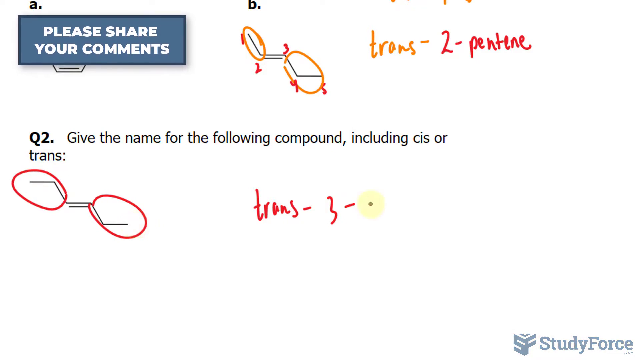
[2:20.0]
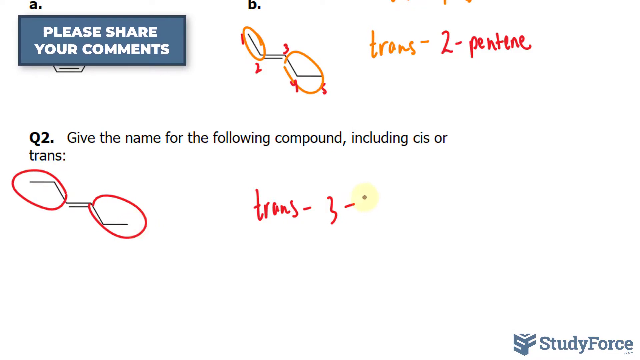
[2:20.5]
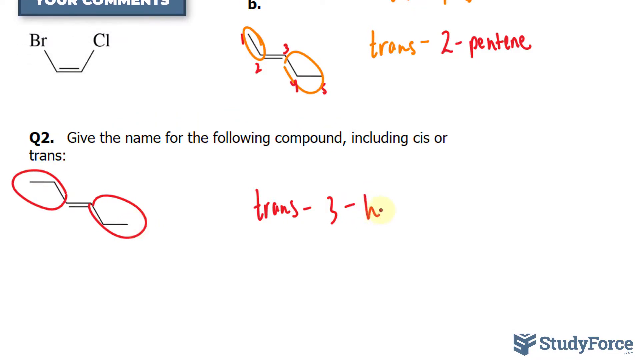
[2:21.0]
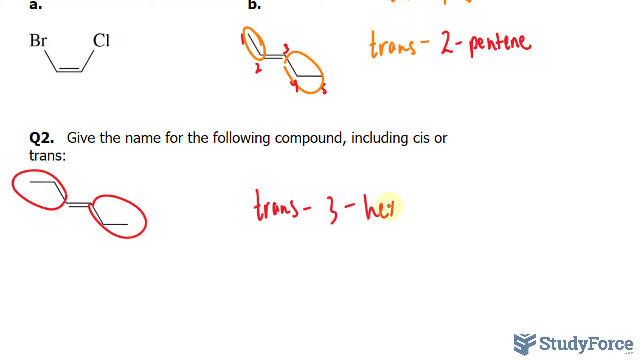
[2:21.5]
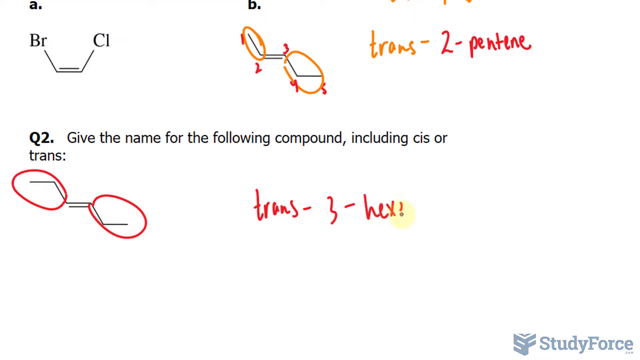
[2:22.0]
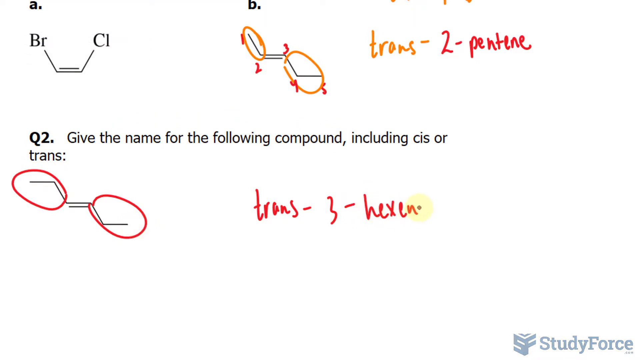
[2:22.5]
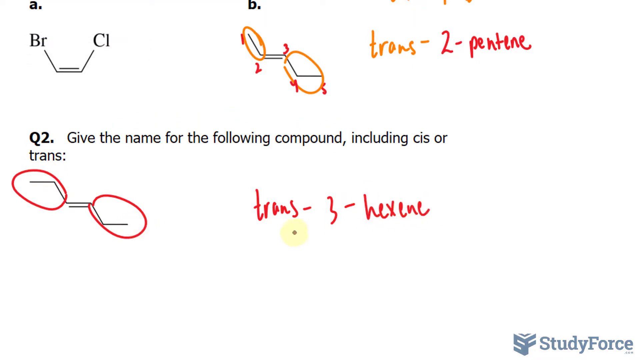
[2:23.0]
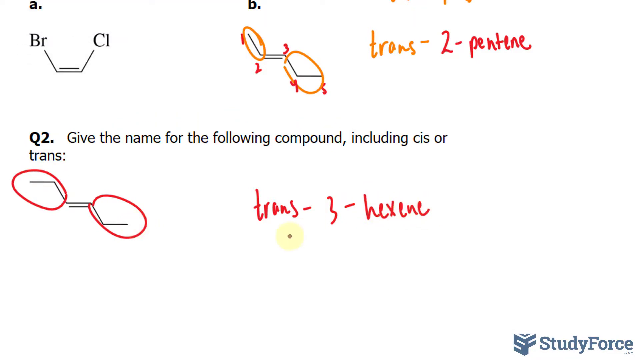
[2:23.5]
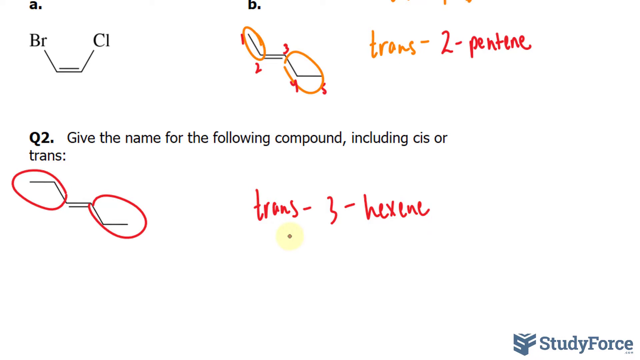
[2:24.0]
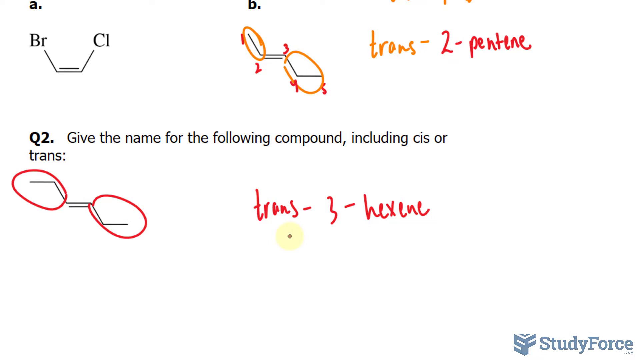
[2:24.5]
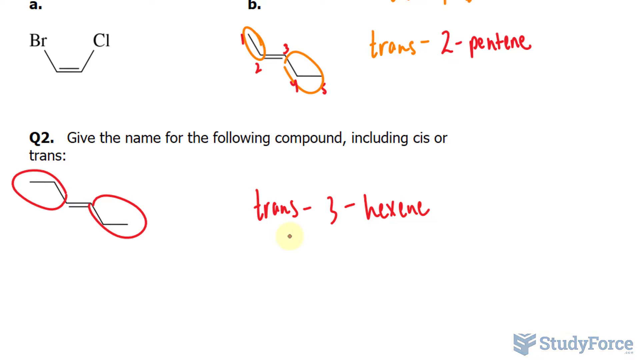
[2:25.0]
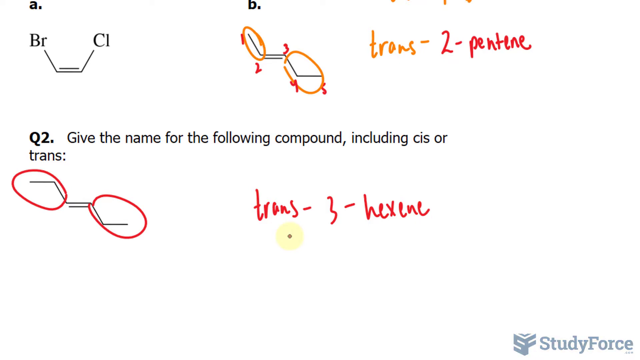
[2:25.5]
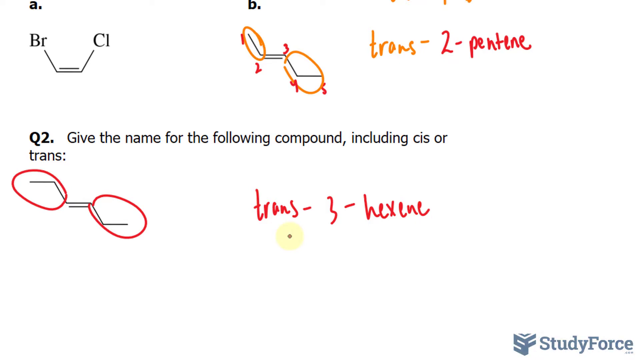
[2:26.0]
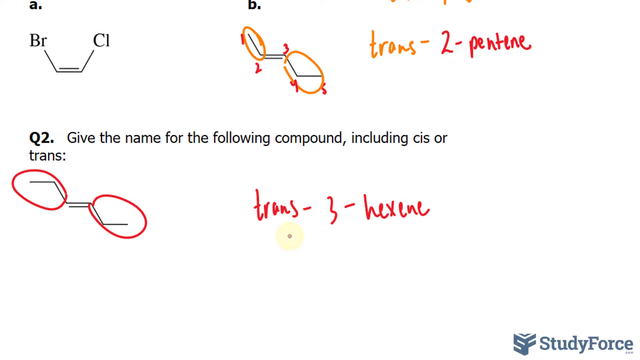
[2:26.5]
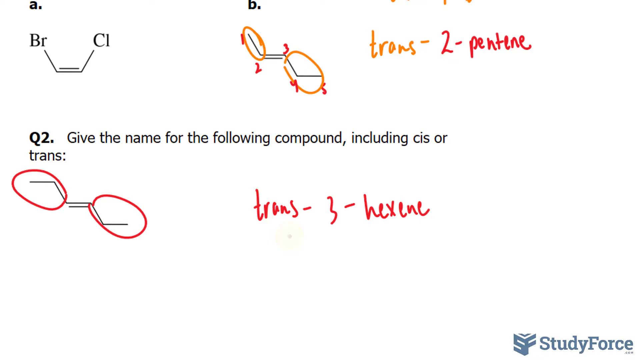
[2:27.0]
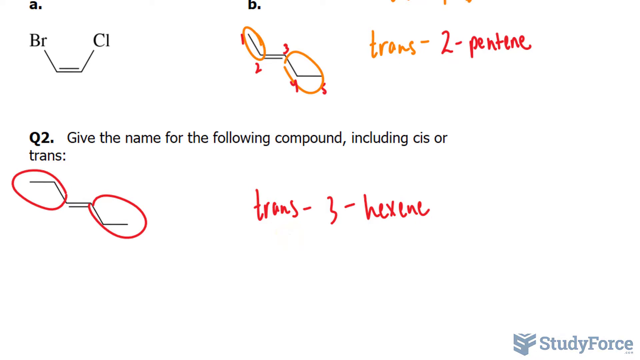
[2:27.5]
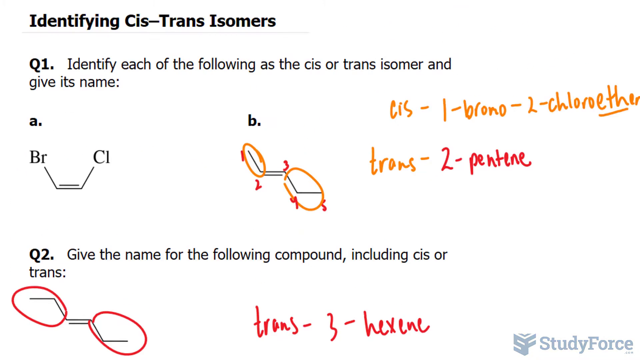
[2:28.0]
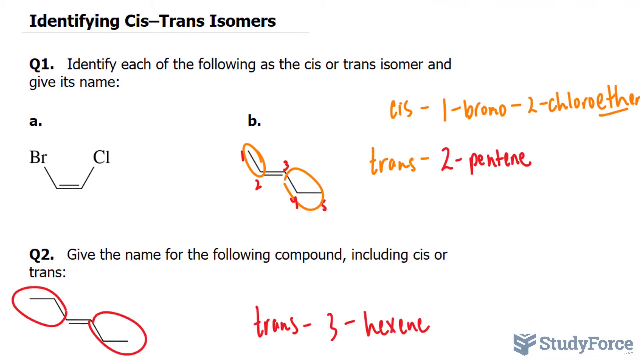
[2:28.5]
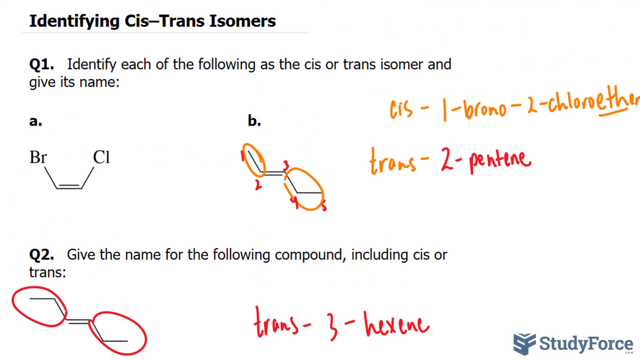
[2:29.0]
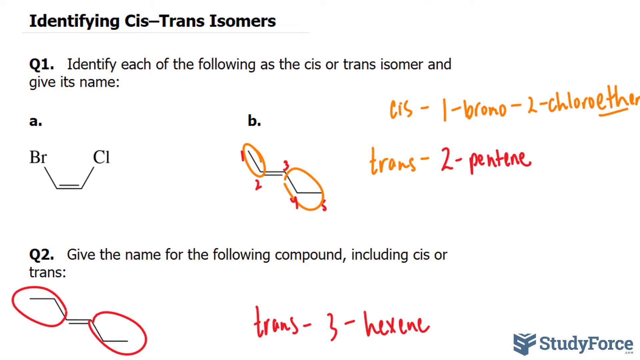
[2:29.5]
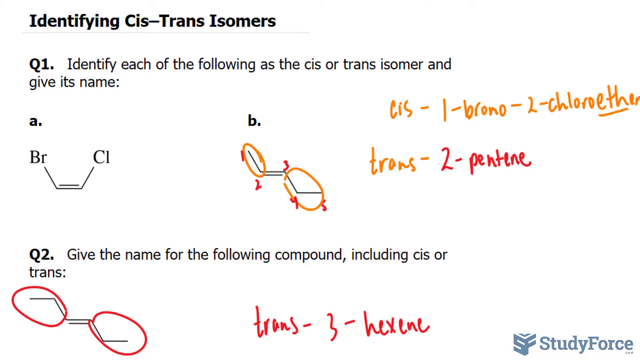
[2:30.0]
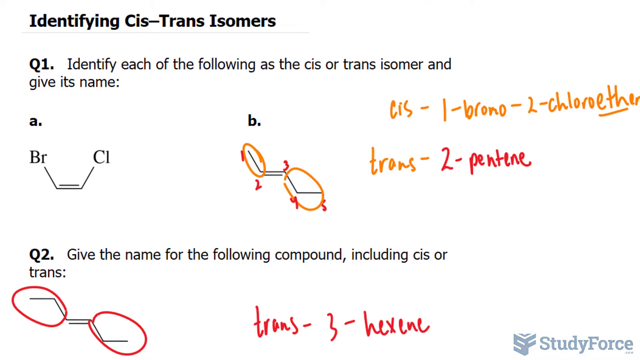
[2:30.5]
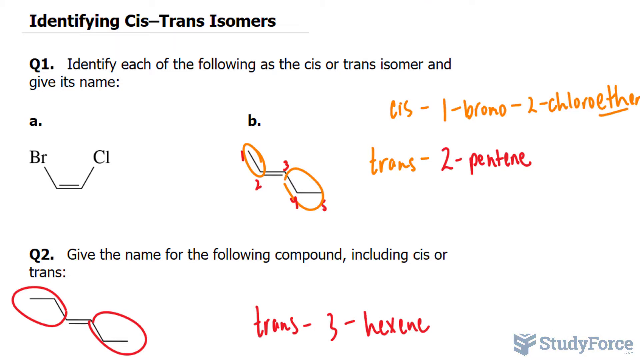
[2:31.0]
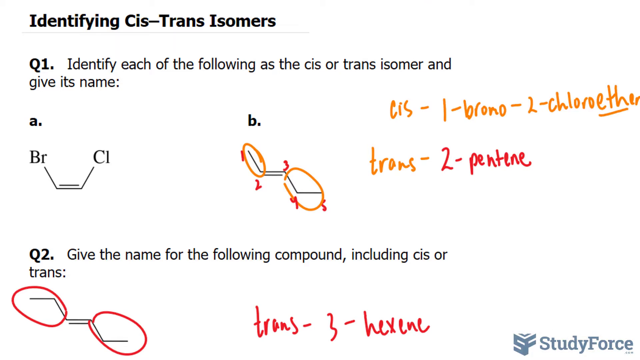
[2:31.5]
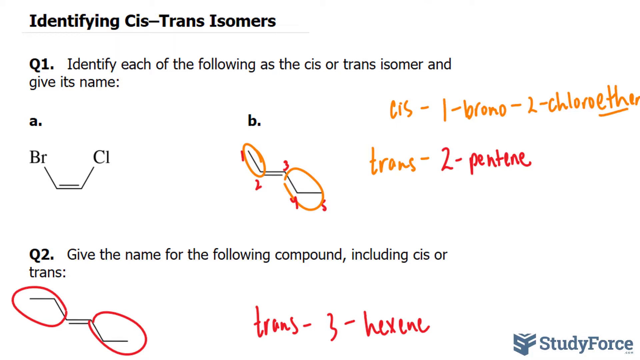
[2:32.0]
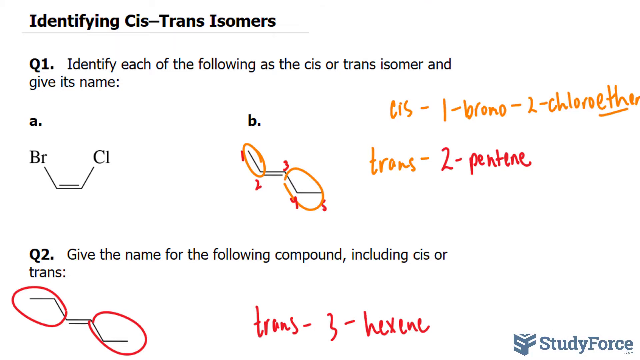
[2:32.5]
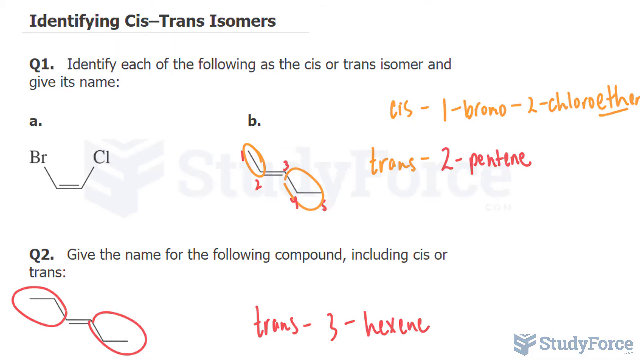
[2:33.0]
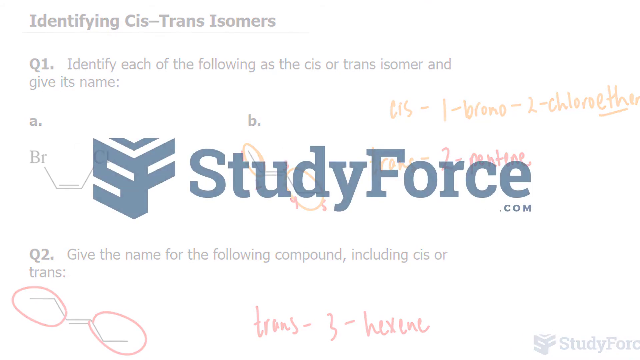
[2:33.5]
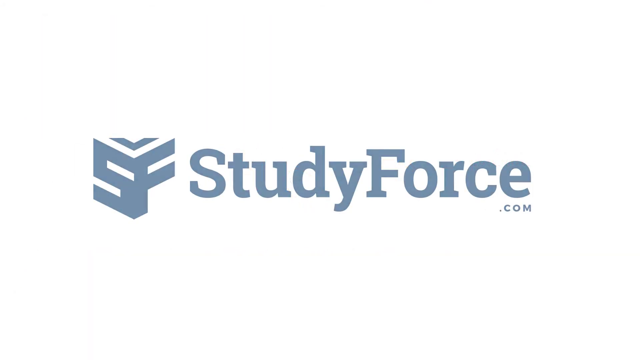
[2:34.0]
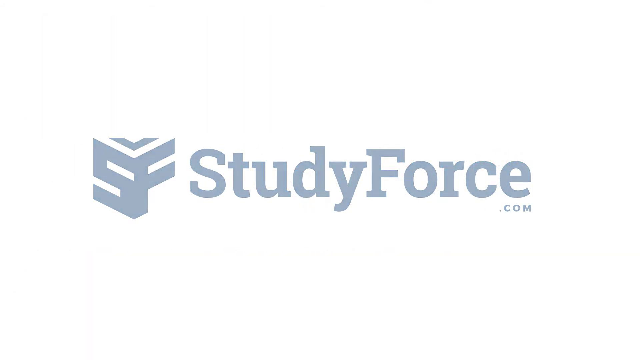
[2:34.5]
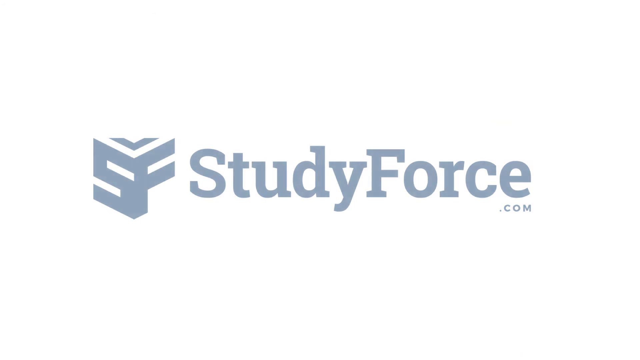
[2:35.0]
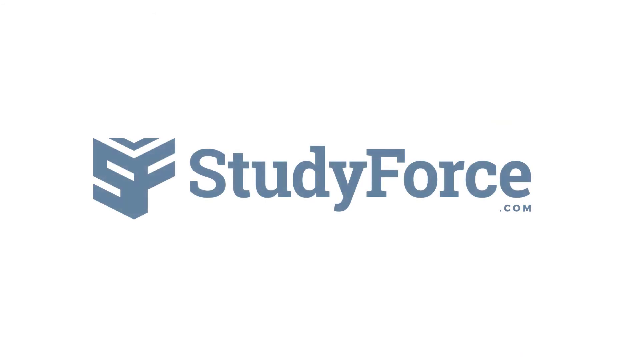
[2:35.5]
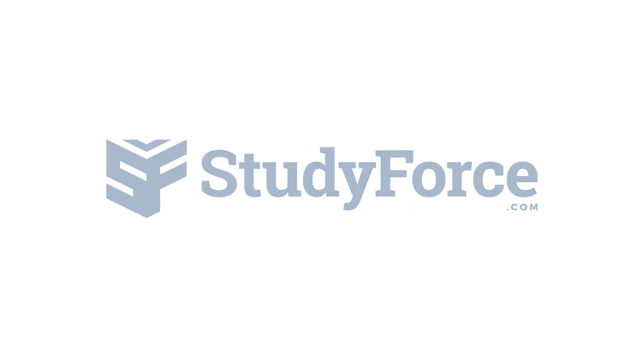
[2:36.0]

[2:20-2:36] At the top left corner of the frame there is a rectangular banner with writing inside and a very thin dark blue edge. The cursor, a very small circle with a large yellow concentric circle, starts writing some words in red in the white space next to the molecule that has some portions circled in red. At the end of the video, a blue logo appears again in the left central portion of the screen, with the blue writing "studyforce.com" next to it. The cursor's movement is very fluid and easy to follow across the page, and the quality of the graphics is rather high.